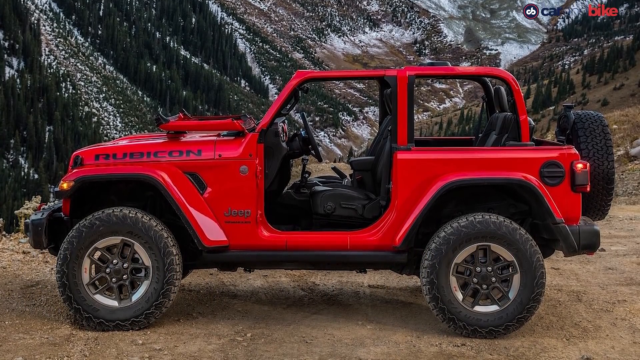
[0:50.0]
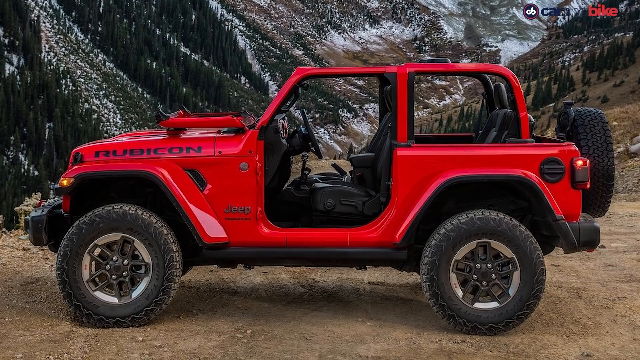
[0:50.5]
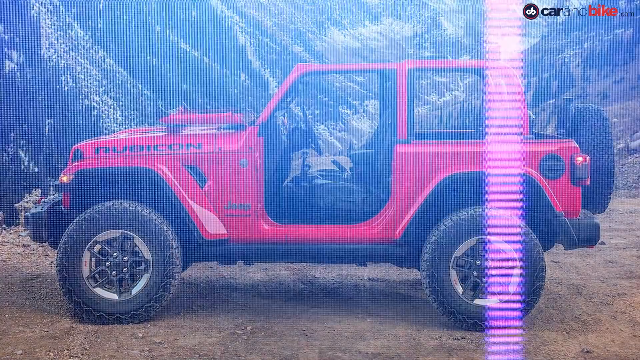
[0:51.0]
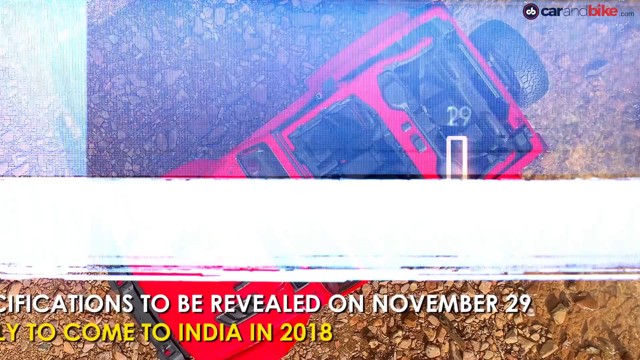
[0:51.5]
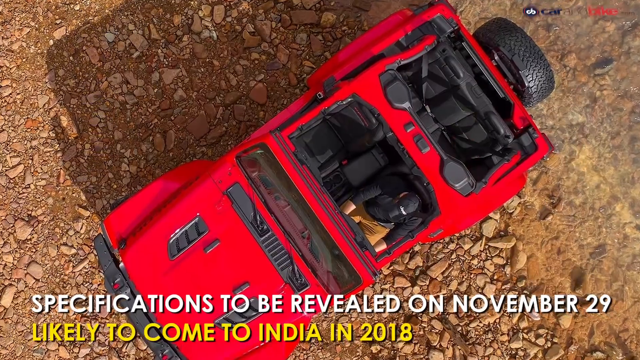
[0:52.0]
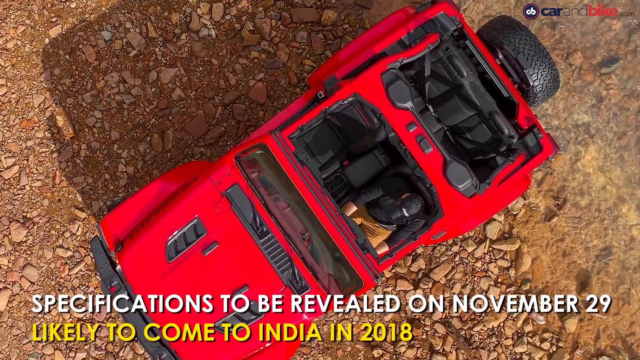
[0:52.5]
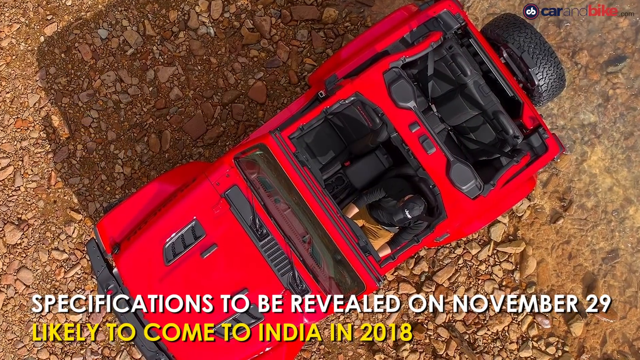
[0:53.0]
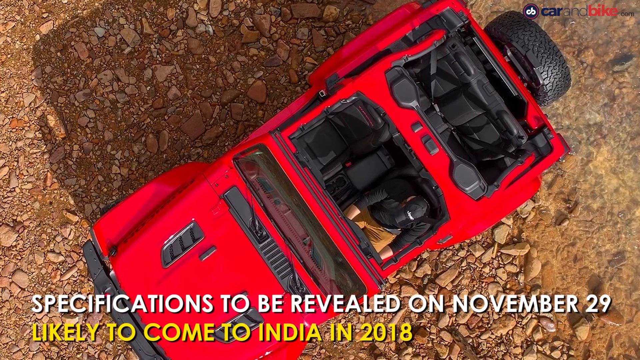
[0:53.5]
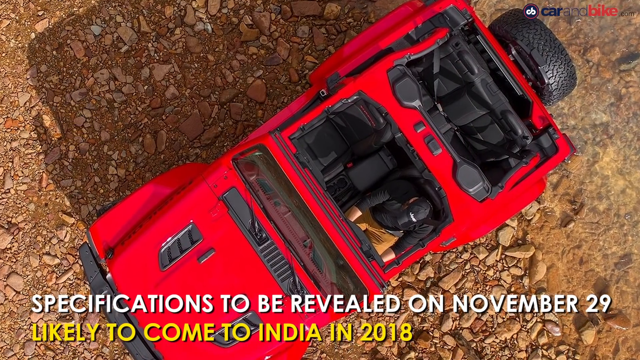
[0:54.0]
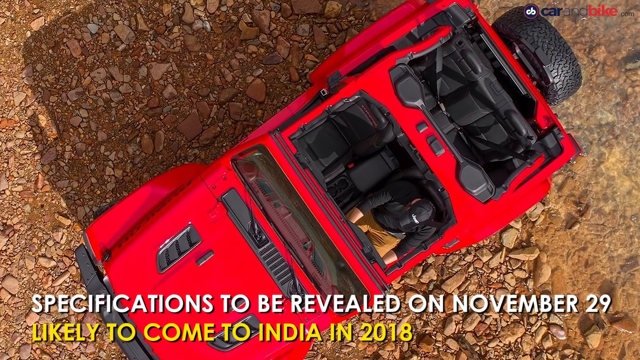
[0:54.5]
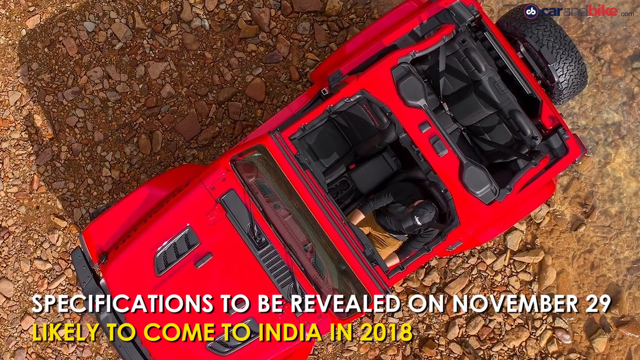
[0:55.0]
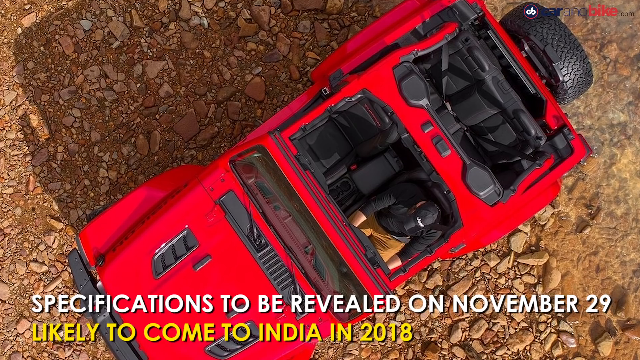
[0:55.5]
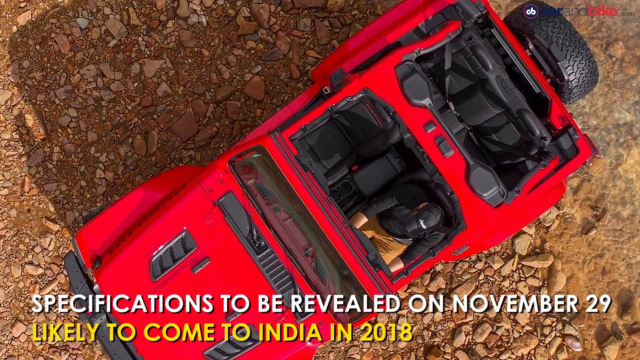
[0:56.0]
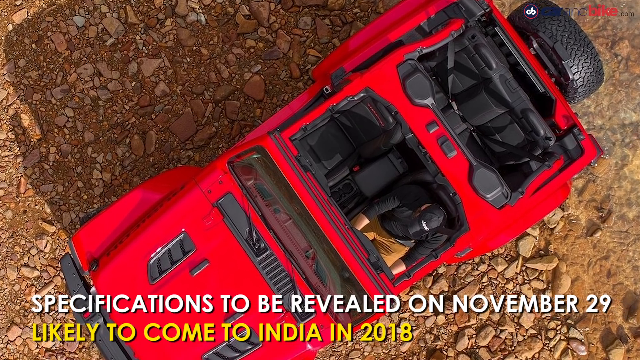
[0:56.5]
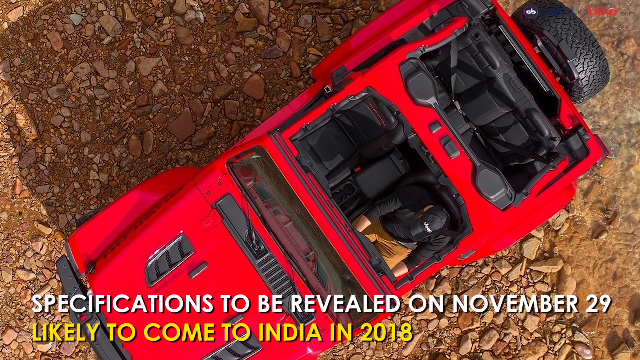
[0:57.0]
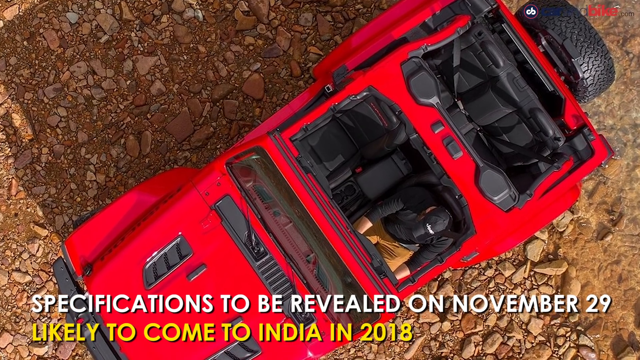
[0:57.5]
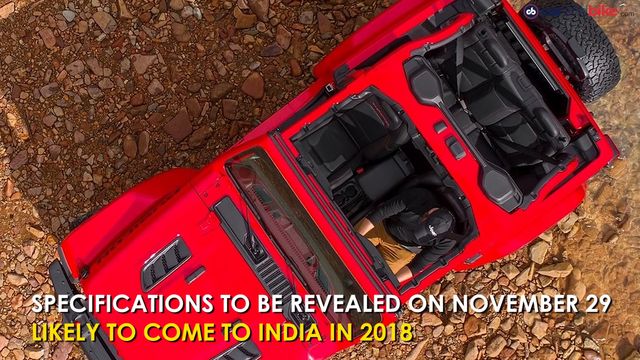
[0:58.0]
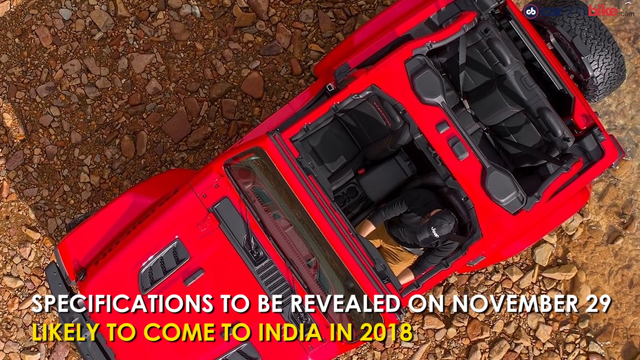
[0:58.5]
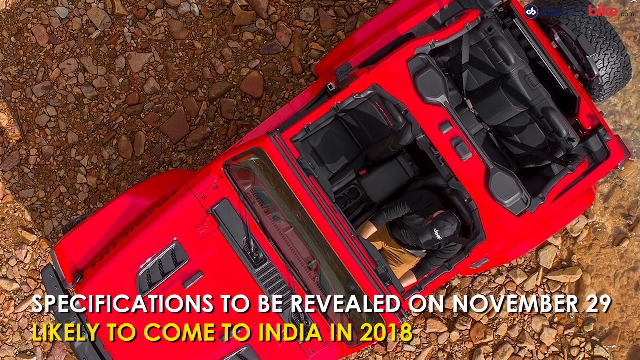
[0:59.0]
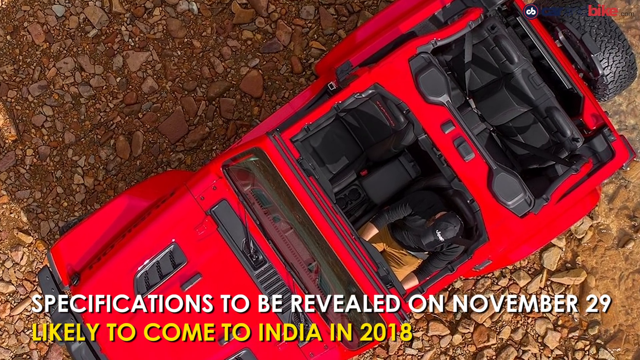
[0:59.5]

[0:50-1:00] Text at the bottom of the screen indicates that the new Jeep will be revealed on November 29th. Stock photos of the Jeep from the manufacturer continue, with edited slow zooms and pans. Only two photos are shown, zoomed in and out: a red Jeep with a mountainous background, stock photos with video effects applied over them.